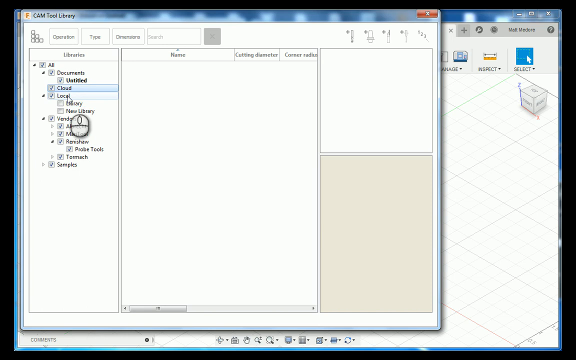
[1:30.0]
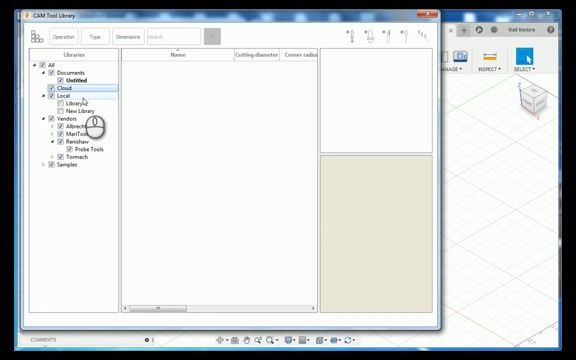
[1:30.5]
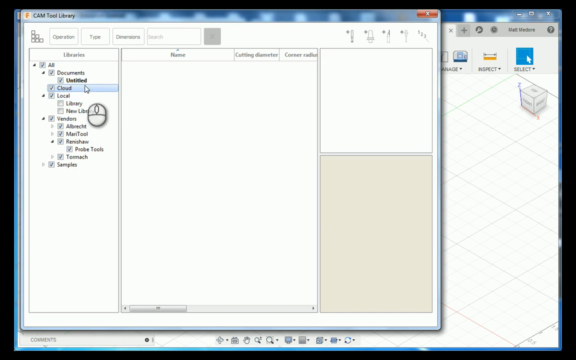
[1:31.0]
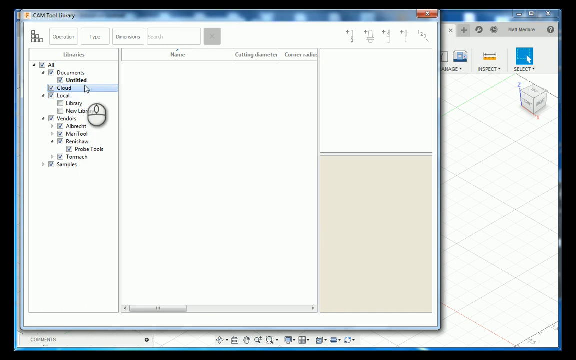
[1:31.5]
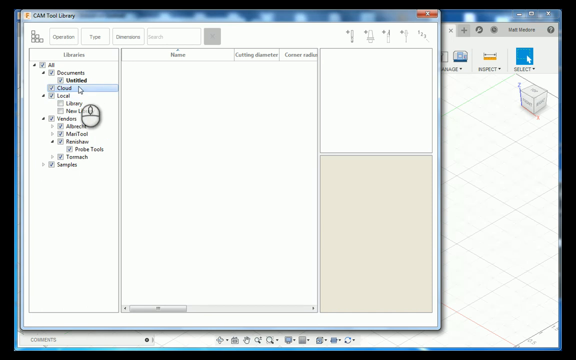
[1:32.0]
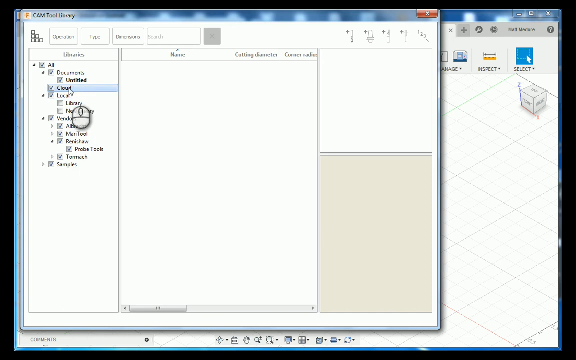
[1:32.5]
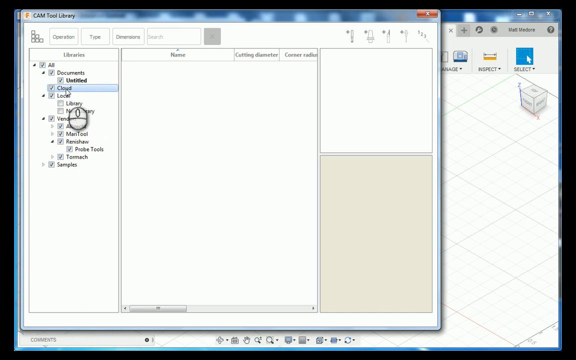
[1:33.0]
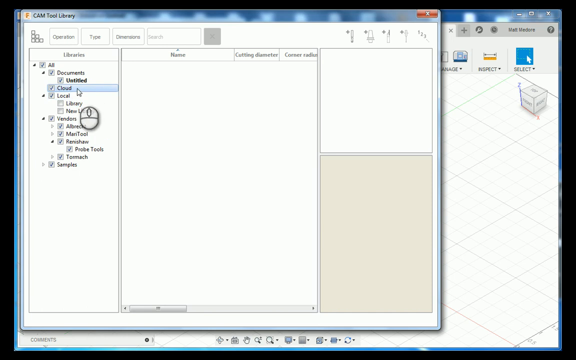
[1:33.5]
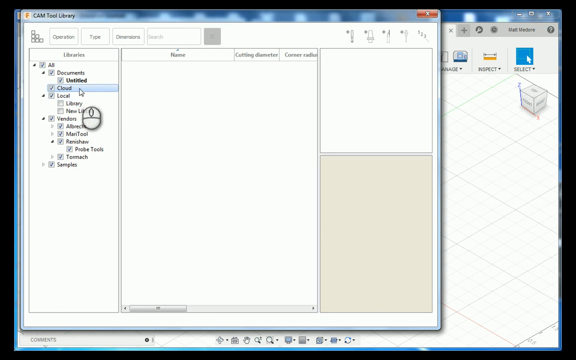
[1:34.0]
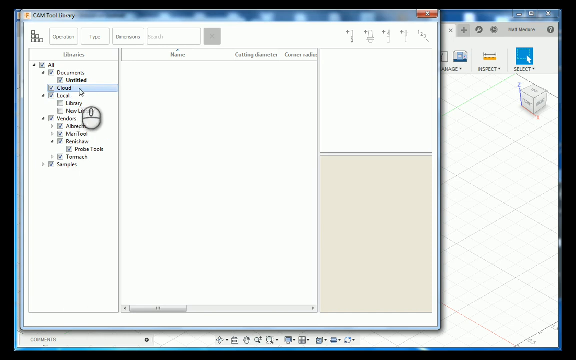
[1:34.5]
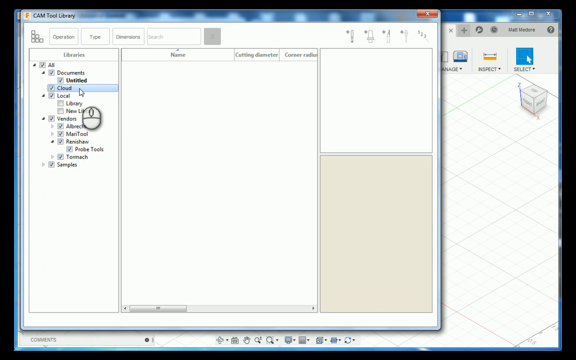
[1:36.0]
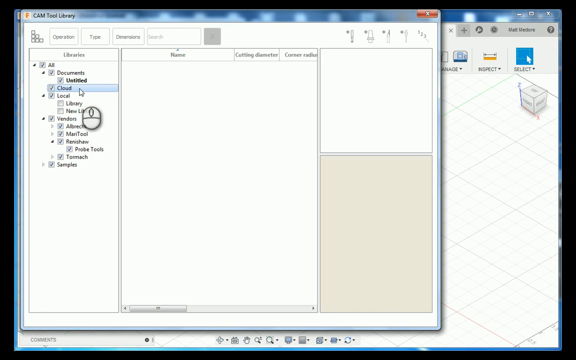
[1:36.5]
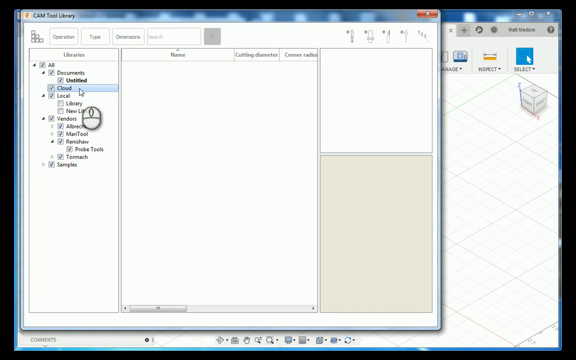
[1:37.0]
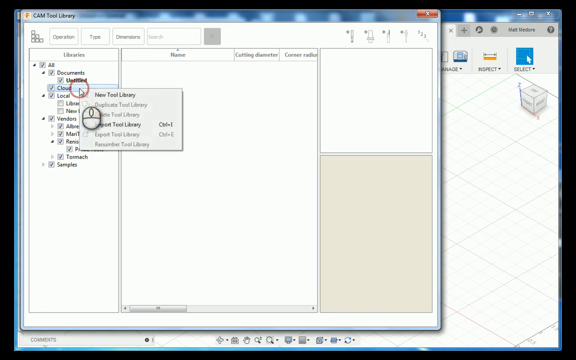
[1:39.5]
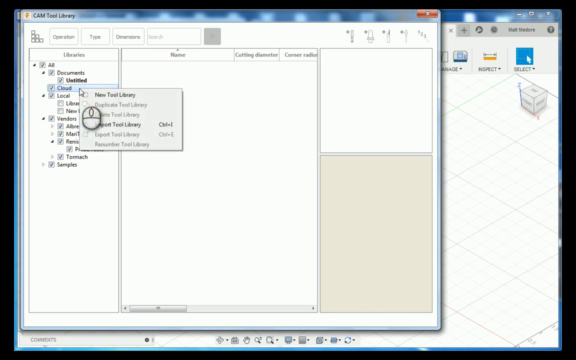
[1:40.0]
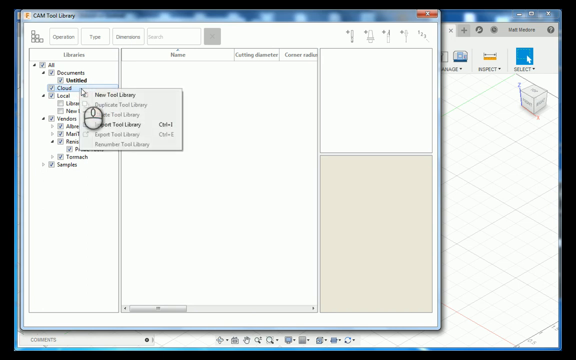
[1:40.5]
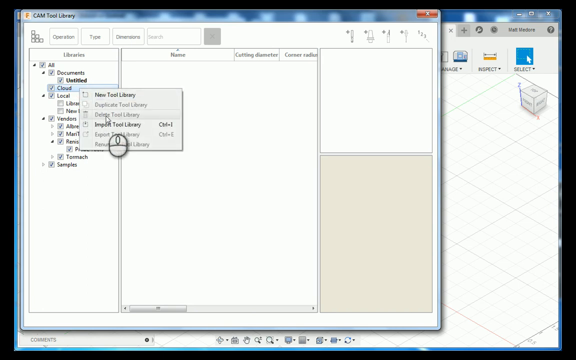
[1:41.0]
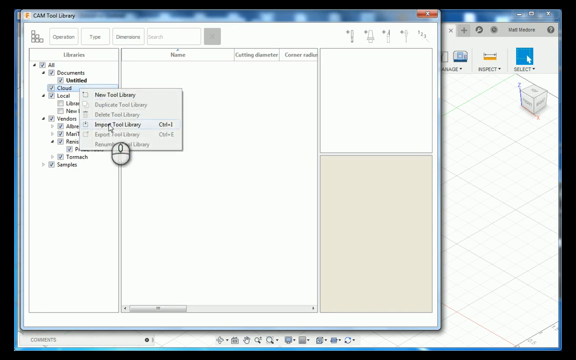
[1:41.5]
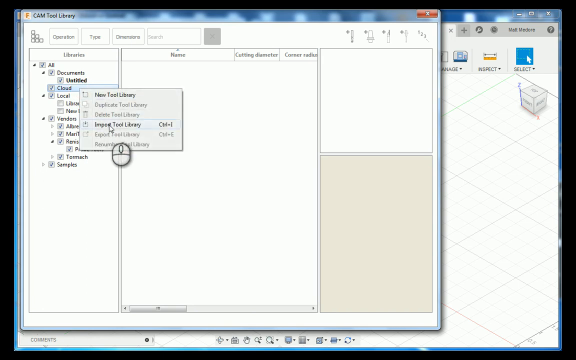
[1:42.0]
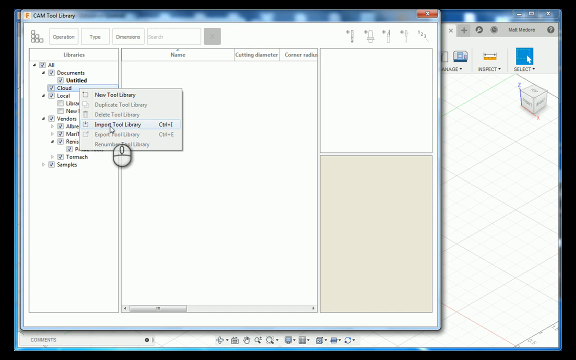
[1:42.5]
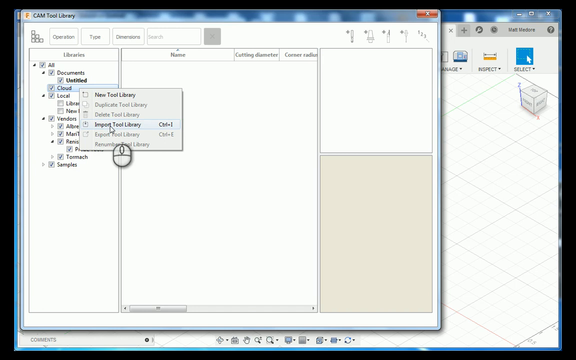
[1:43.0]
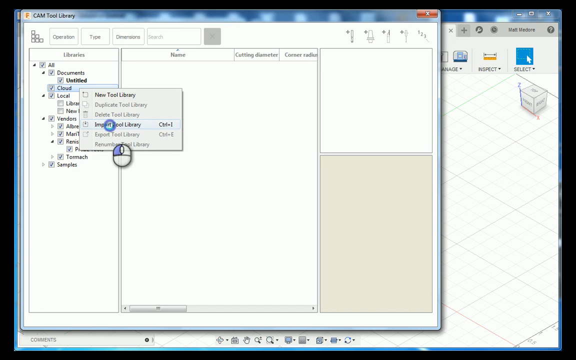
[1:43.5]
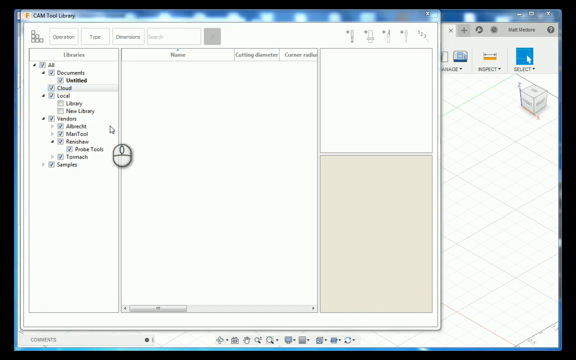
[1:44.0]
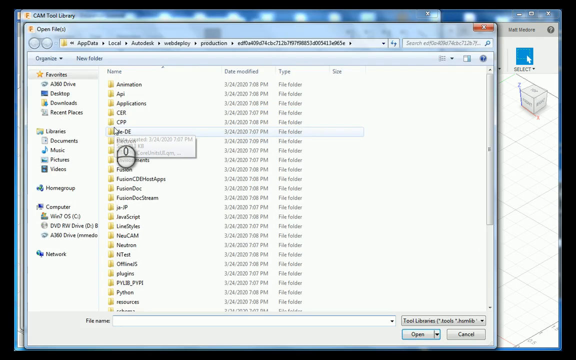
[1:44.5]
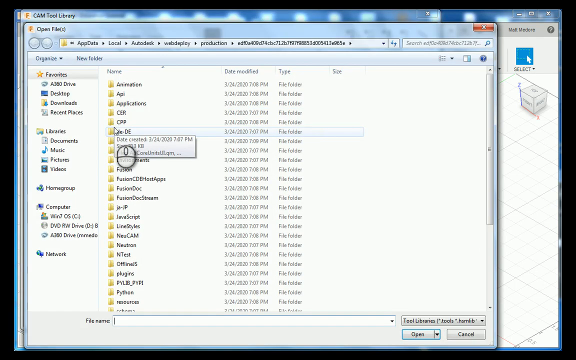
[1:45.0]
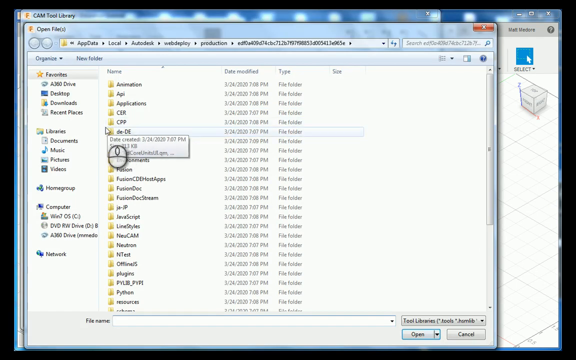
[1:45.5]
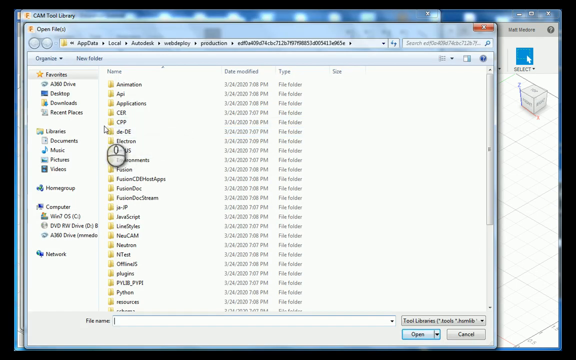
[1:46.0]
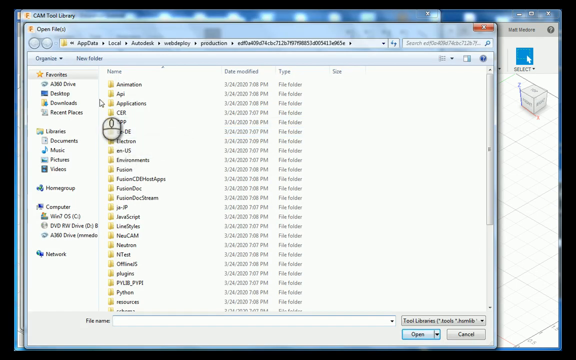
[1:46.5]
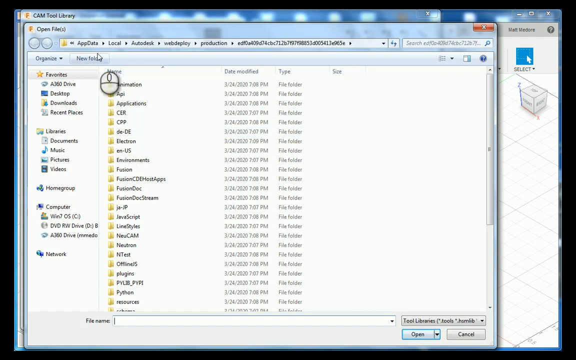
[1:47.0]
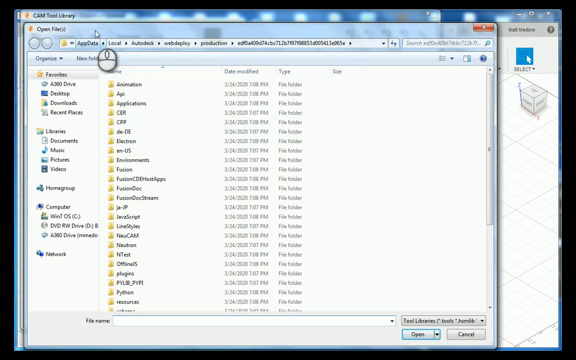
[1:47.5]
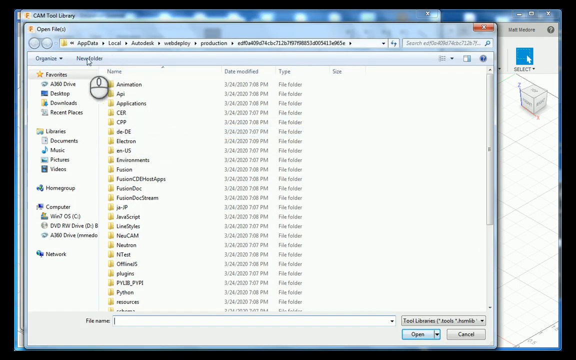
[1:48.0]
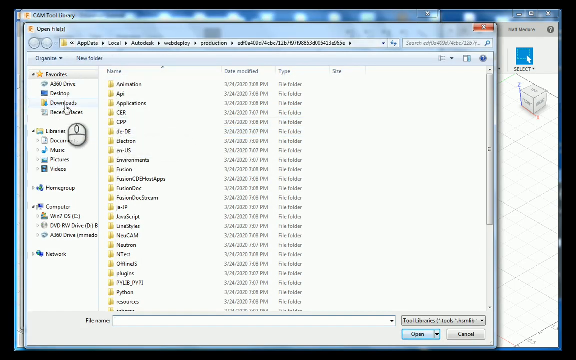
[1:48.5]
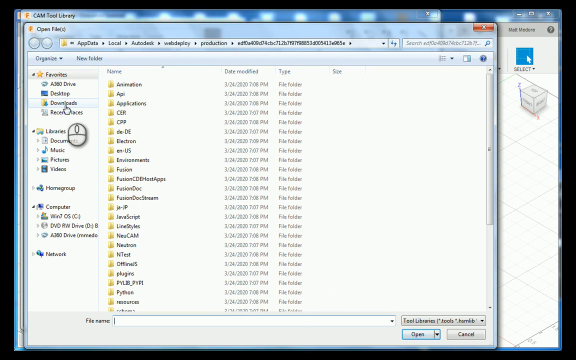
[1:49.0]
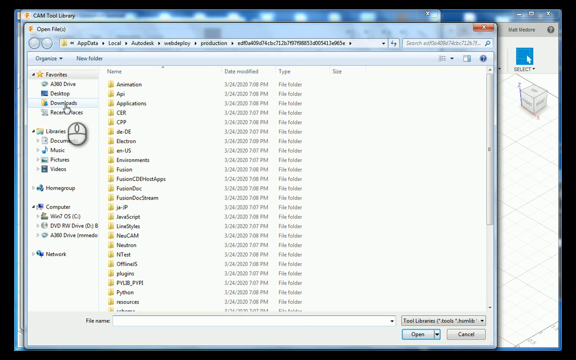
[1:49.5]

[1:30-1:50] In a modeling program, a sub-window called "CamToolLibrary" is open. The mouse moves over various library file paths, many with checked checkboxes next to them. It starts over "local", moves up to "cloud", moves left and right over the word "cloud" and stays to the right of it. A click to the right of "cloud" opens a context menu in which only two options are selectable, "NewToolLibrary" and "PortToolLibrary". The user clicks "PortToolLibrary"; a blue circle comes out of the mouse pointer, showing a left-click, and a new window opens. This window says "Open Files" and lists multiple files available to open. The person navigates to the favorite file locations on the left and mouses over "Downloads".